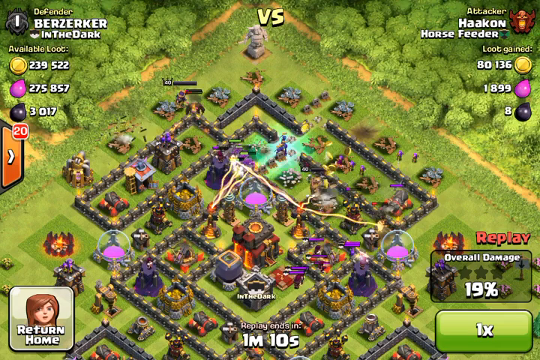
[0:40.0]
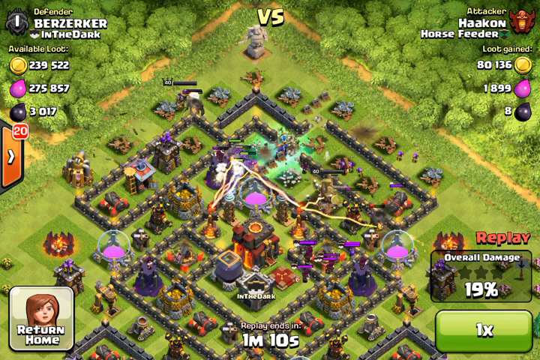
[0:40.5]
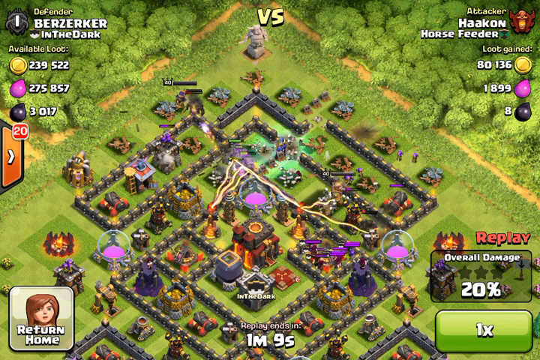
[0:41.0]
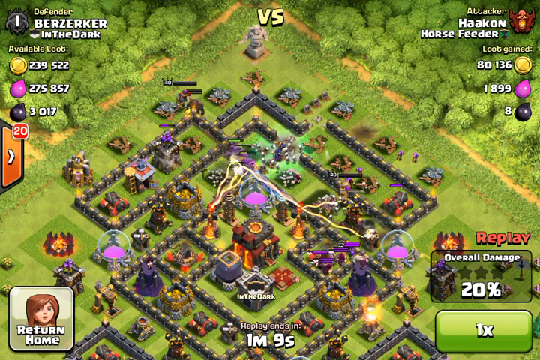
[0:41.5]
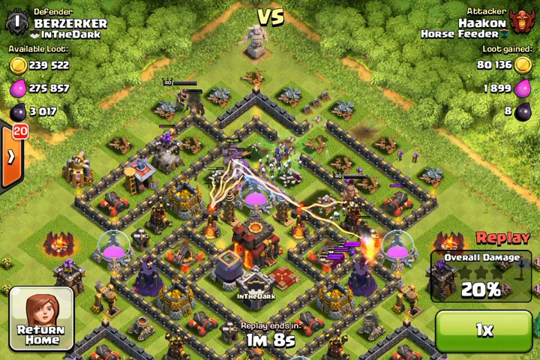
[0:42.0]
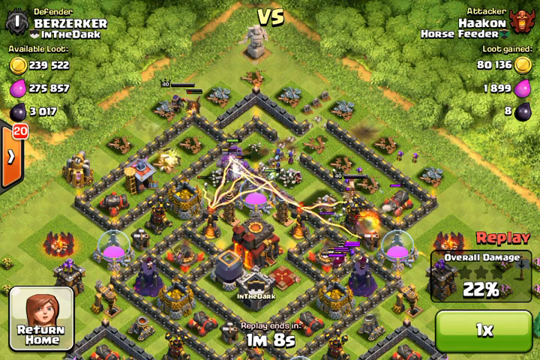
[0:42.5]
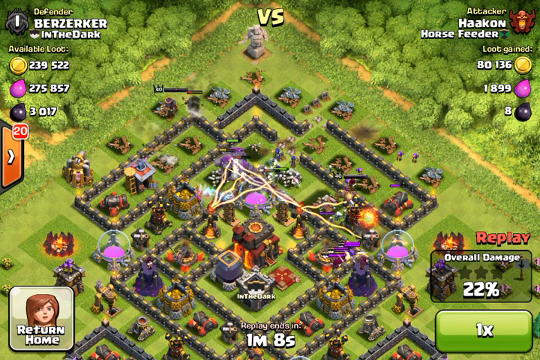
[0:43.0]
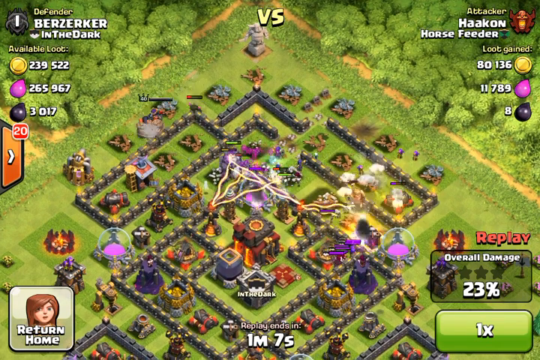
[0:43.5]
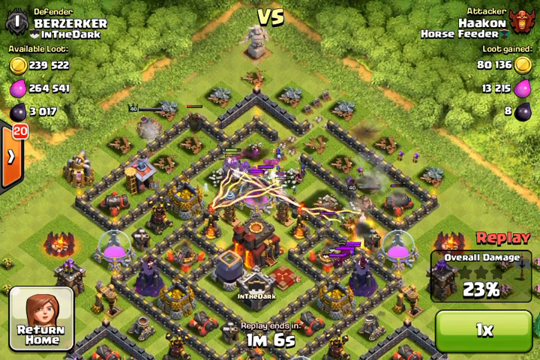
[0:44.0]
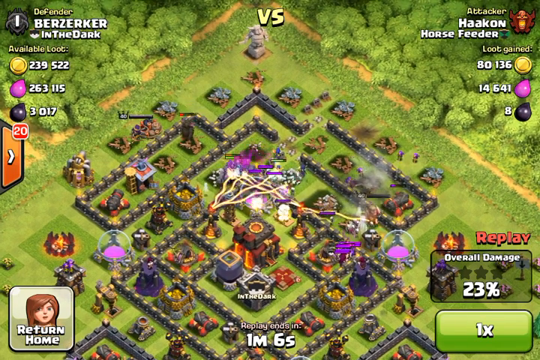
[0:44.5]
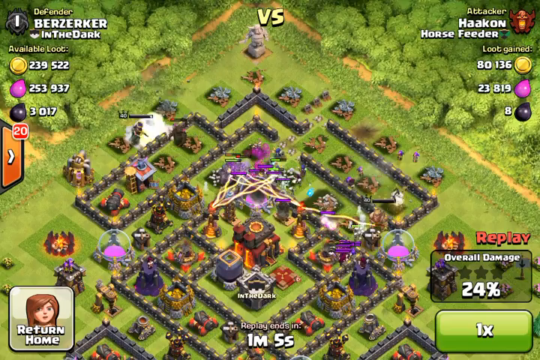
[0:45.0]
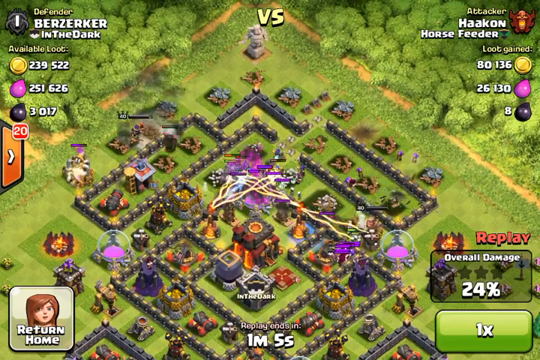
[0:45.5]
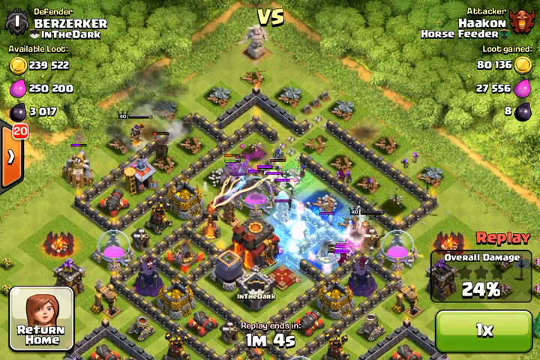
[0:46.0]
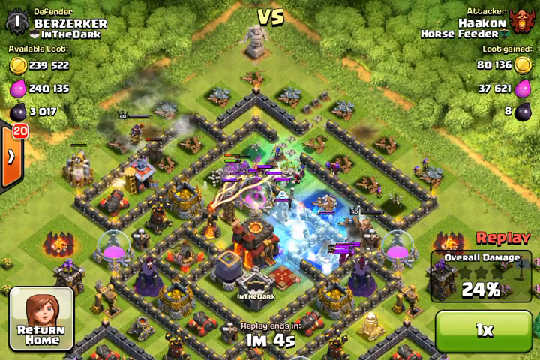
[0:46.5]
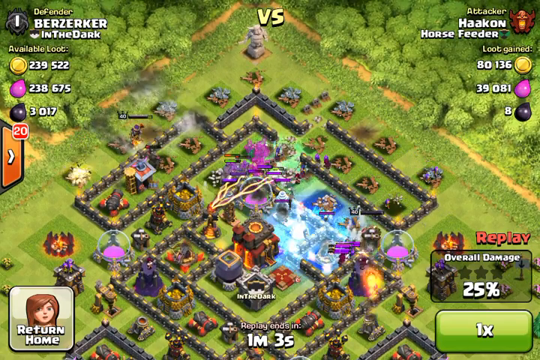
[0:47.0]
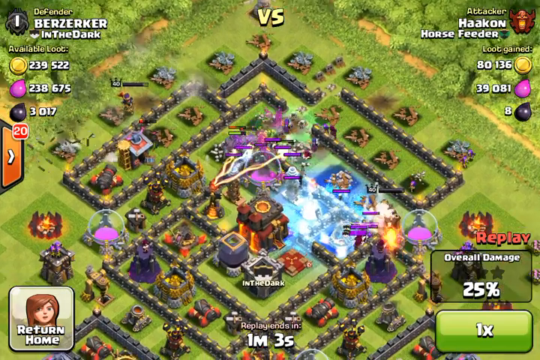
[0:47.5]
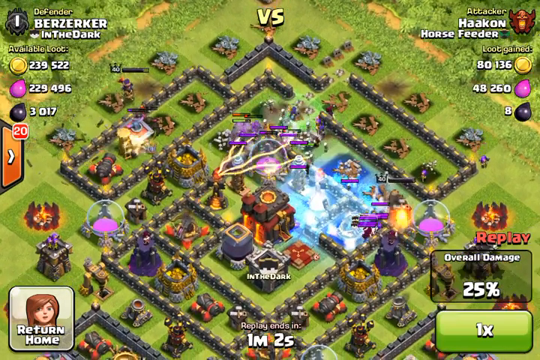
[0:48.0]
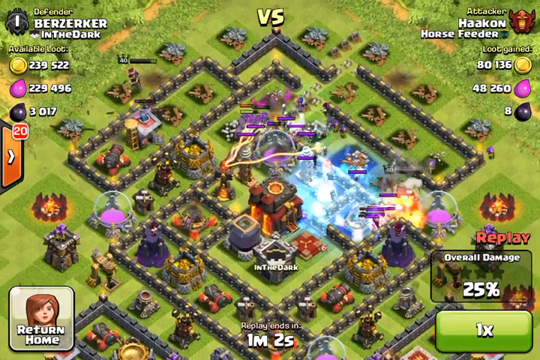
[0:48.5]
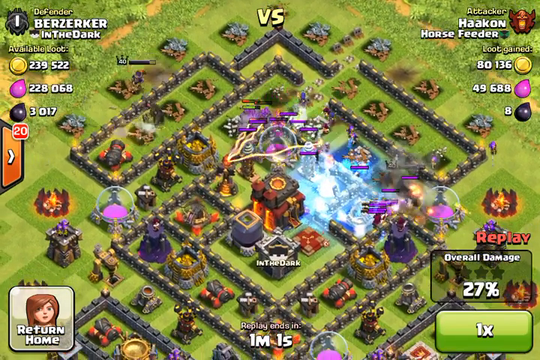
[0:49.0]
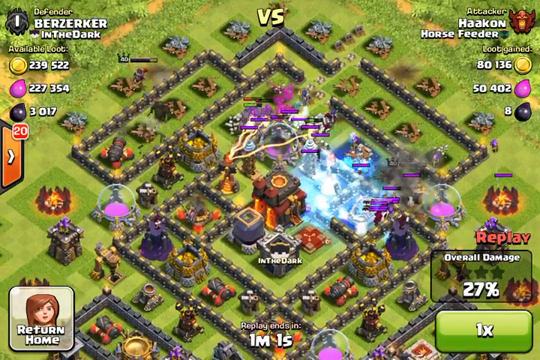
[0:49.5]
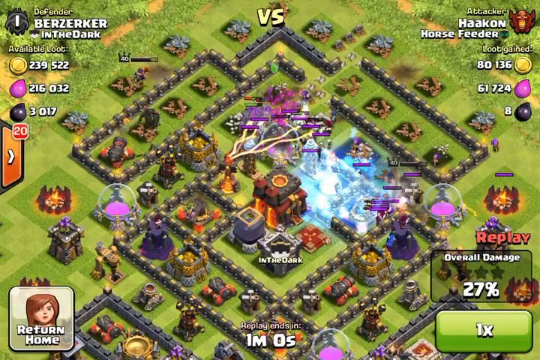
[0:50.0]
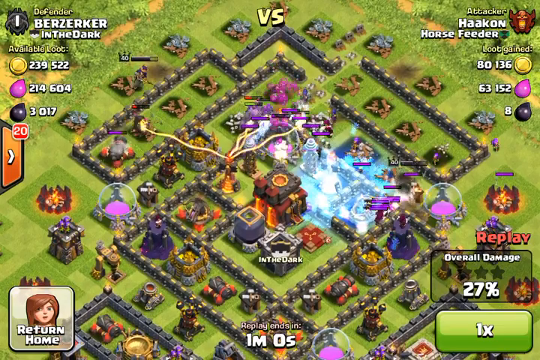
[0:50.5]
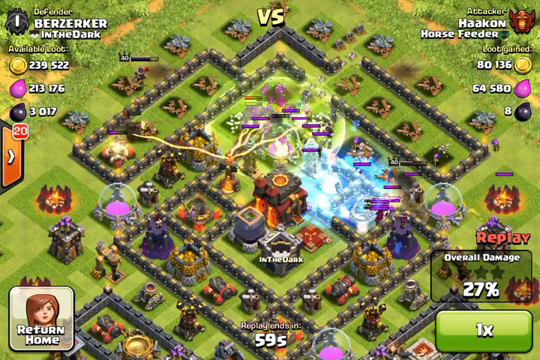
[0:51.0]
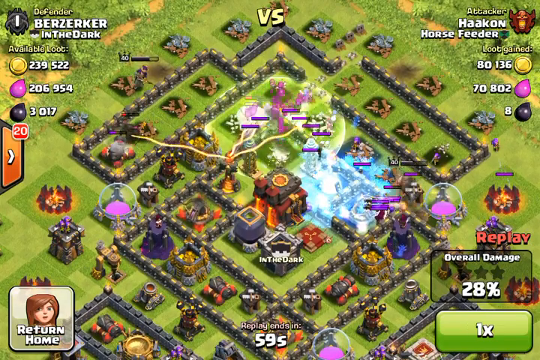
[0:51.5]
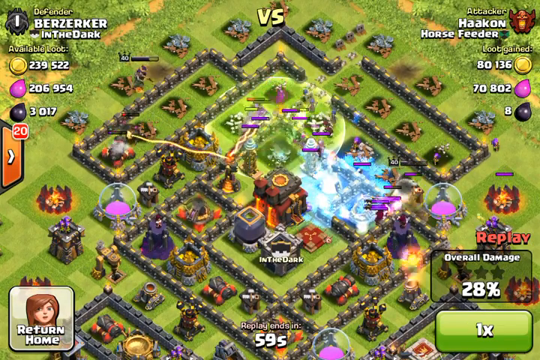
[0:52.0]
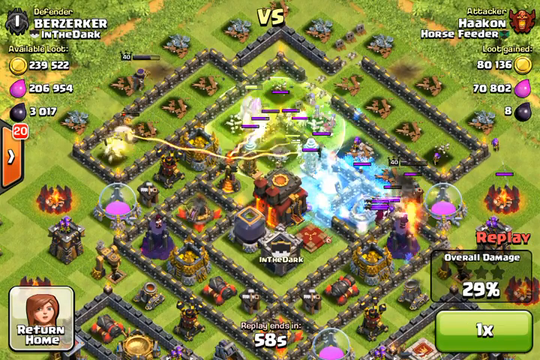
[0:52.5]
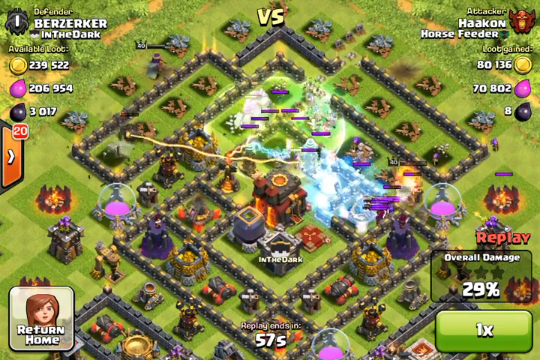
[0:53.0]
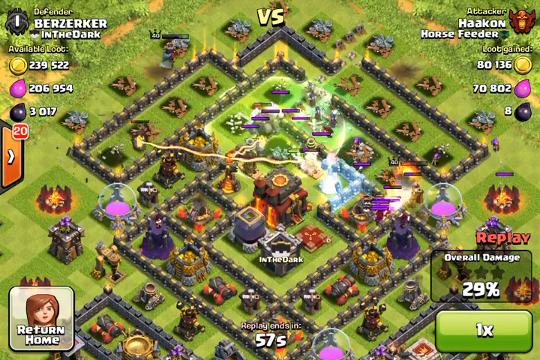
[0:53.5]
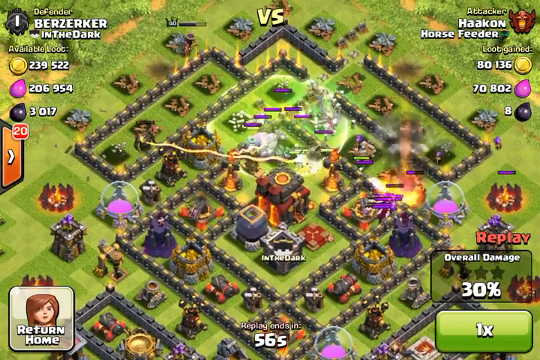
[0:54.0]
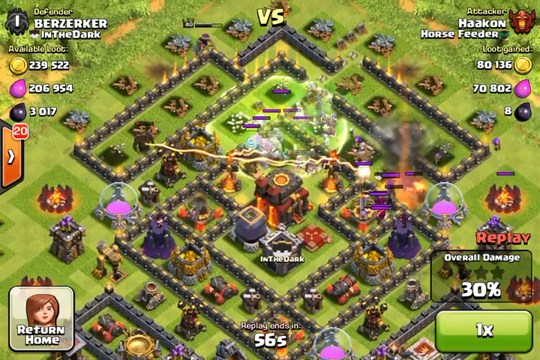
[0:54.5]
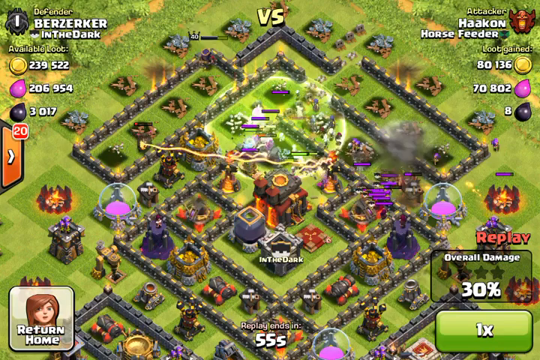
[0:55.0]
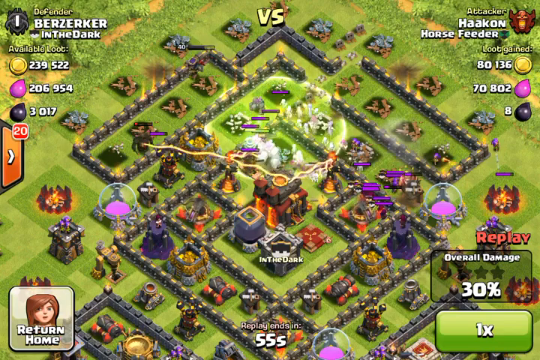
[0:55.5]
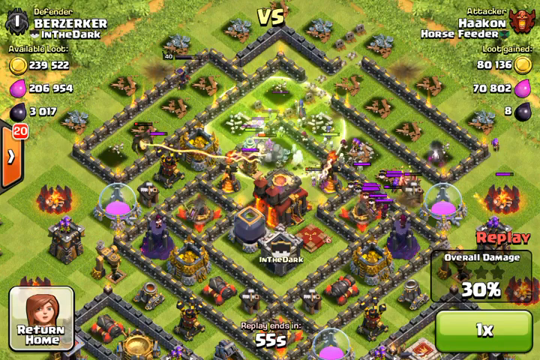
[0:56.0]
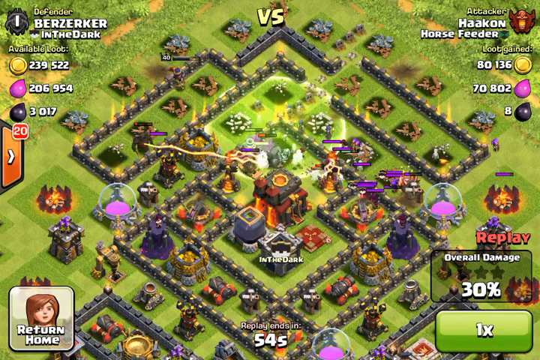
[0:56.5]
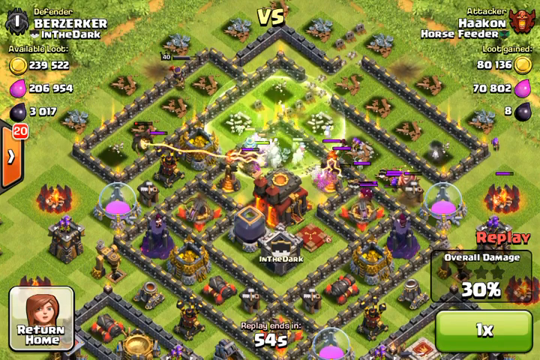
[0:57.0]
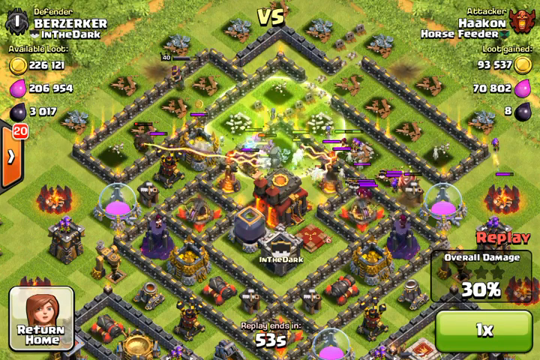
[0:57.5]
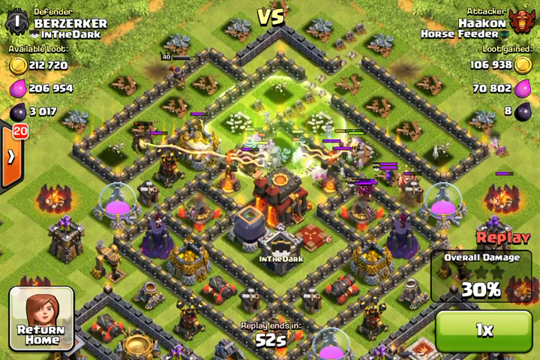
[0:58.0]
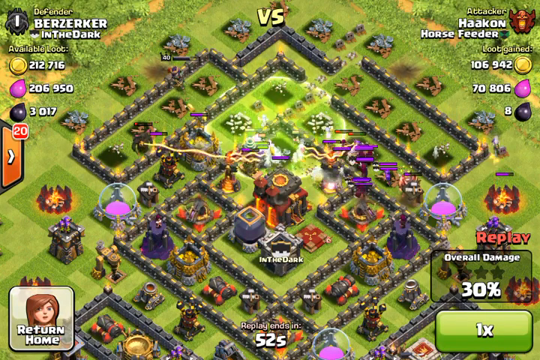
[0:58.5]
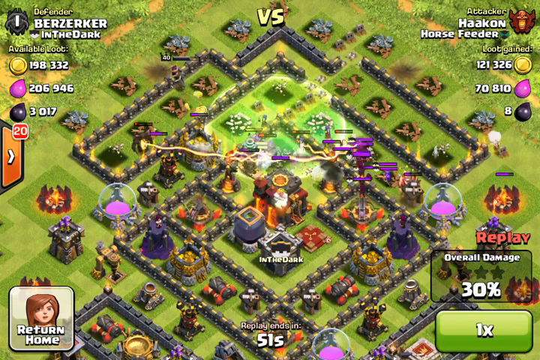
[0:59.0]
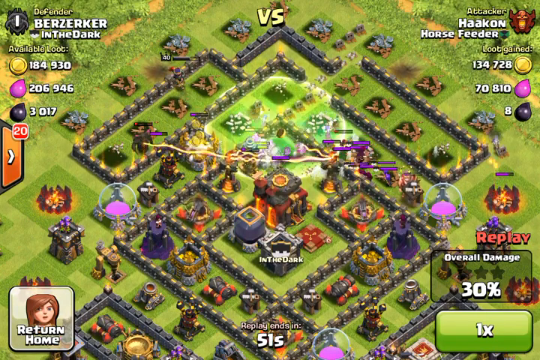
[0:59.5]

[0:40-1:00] The overhead view of what seems to be a Clash of Clans game continues, with a reverse sign in the middle. The battle seems to be midway. Horse Feeder has infiltrated Berserker's city and is doing a lot of damage, gaining a lot of loot, while Berserker's loot, the available resources within the city, goes down. The city is destroyed by a variety of characters; it is hard to discern exactly what is happening, but the damage is significant, now past double digits and almost a third of the way. A tab on the left side seems to be highlighted with a 20. Destruction continues, and the attackers appear to be focusing on the center.